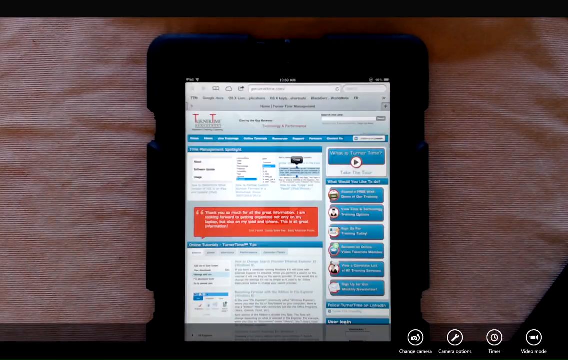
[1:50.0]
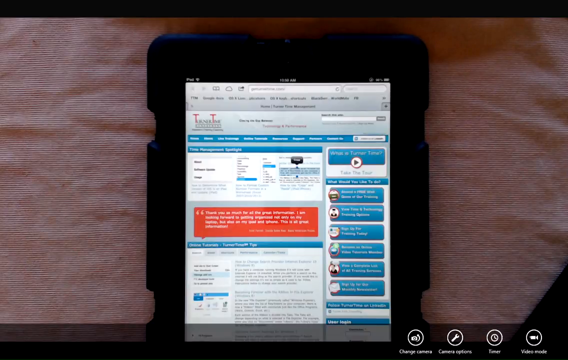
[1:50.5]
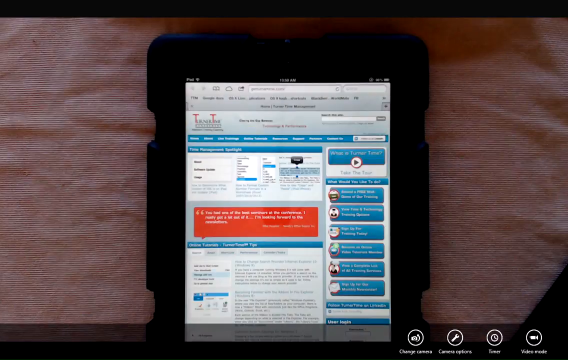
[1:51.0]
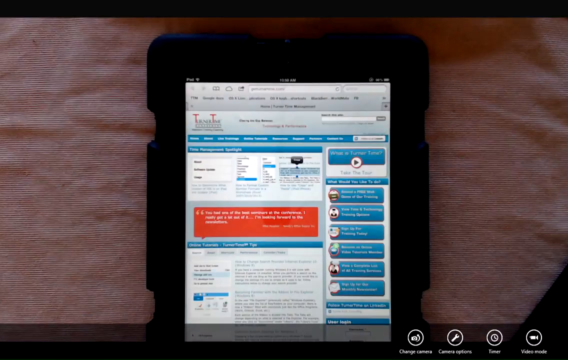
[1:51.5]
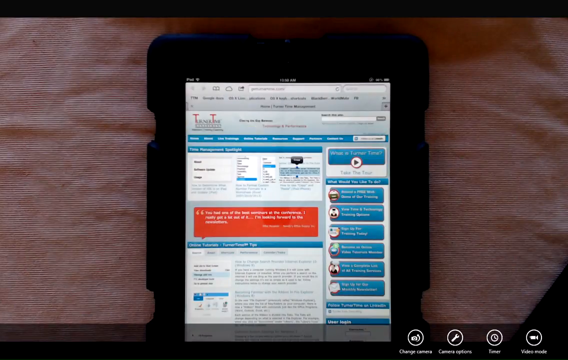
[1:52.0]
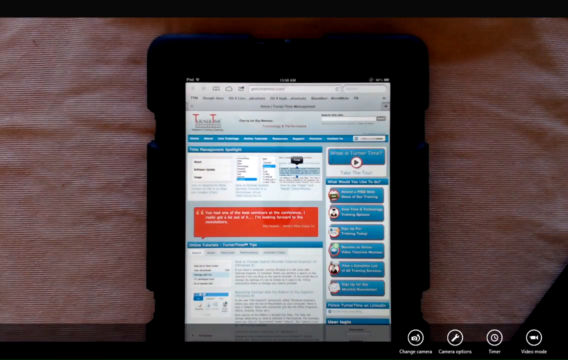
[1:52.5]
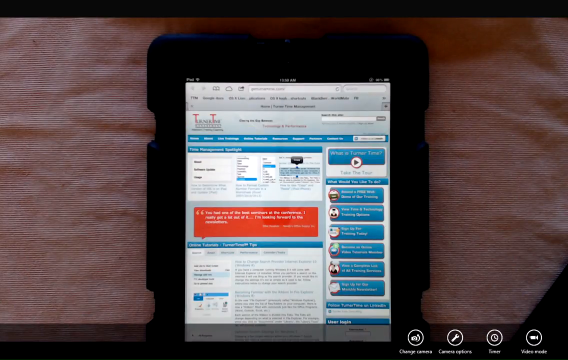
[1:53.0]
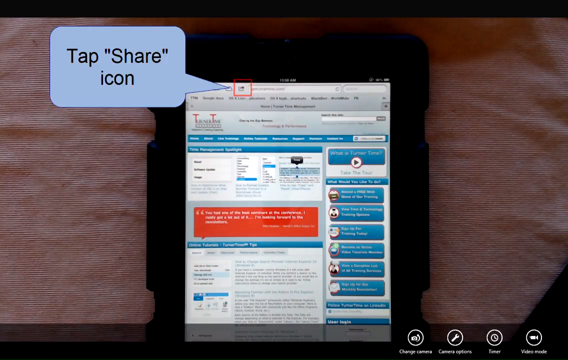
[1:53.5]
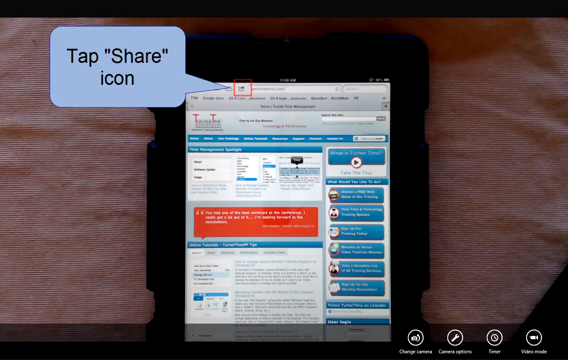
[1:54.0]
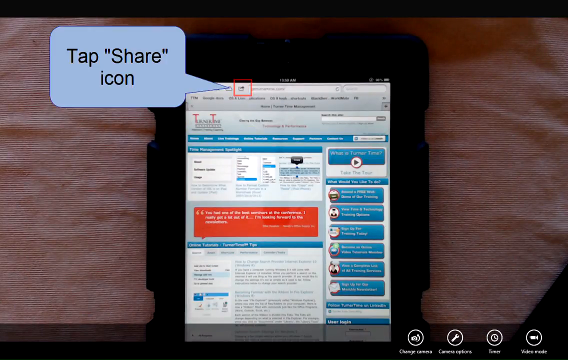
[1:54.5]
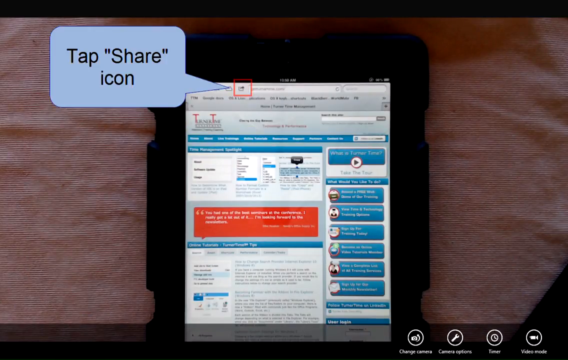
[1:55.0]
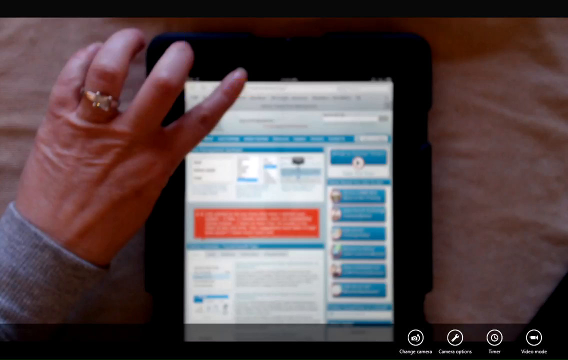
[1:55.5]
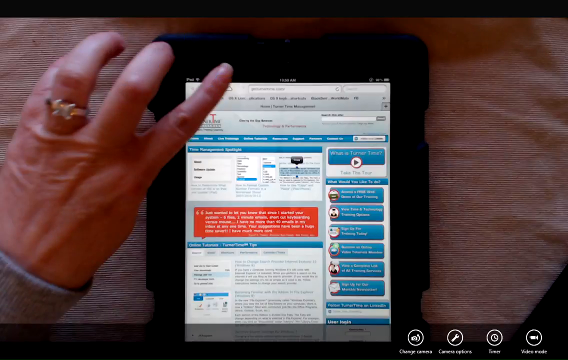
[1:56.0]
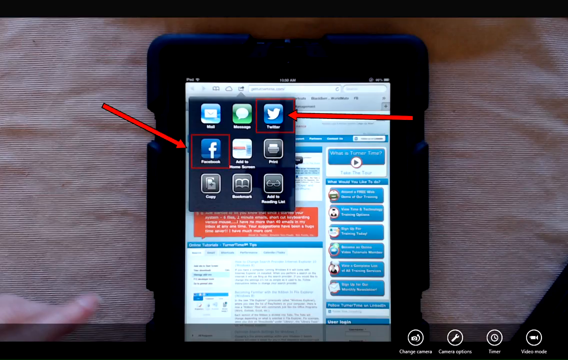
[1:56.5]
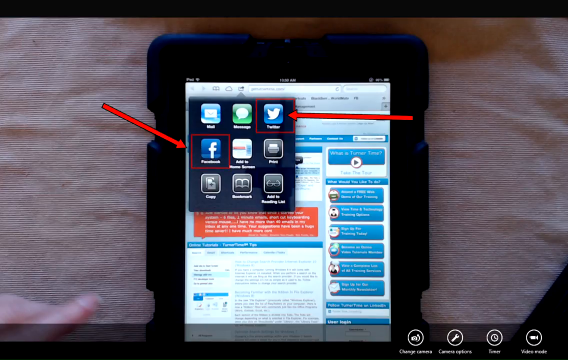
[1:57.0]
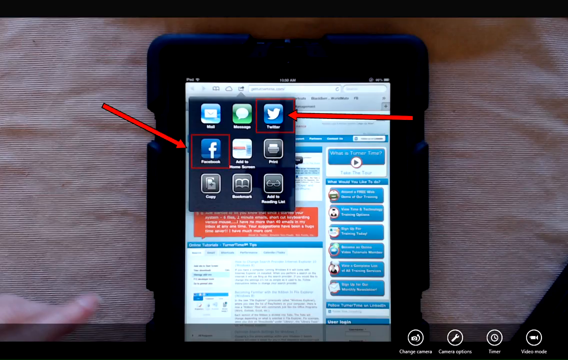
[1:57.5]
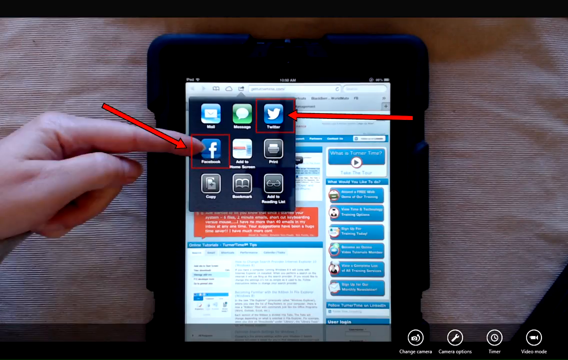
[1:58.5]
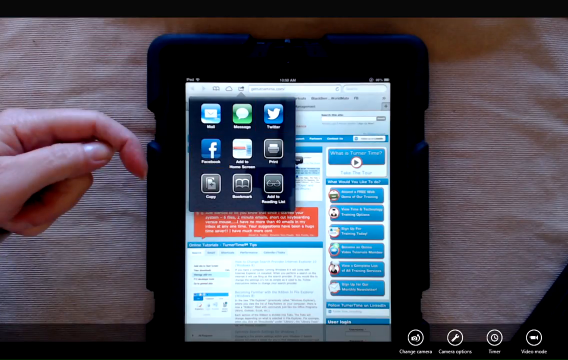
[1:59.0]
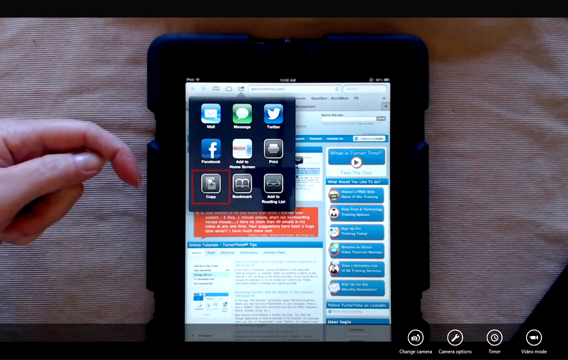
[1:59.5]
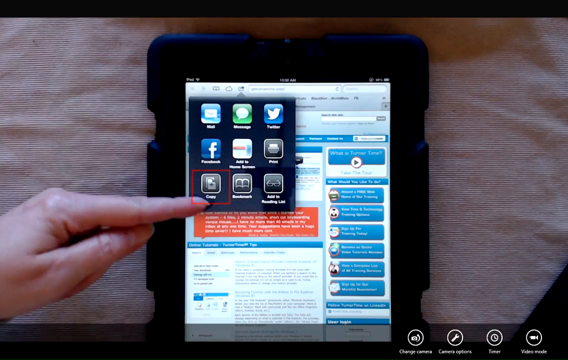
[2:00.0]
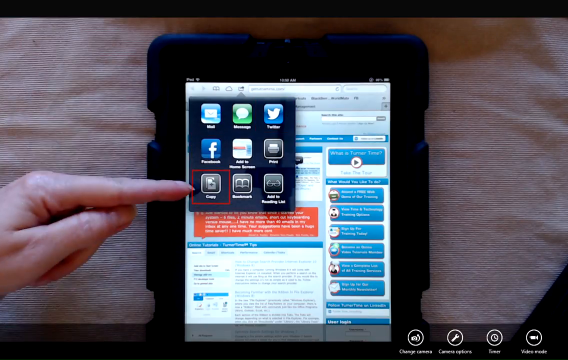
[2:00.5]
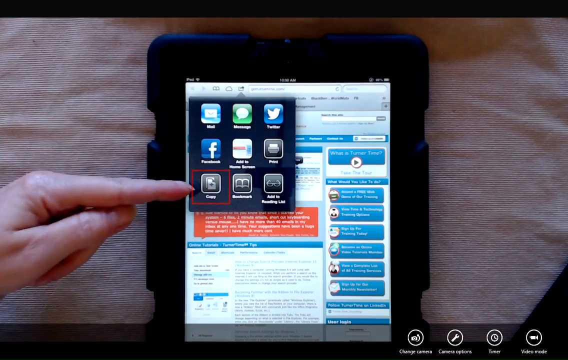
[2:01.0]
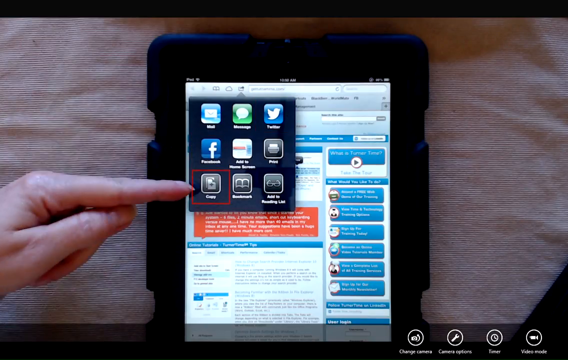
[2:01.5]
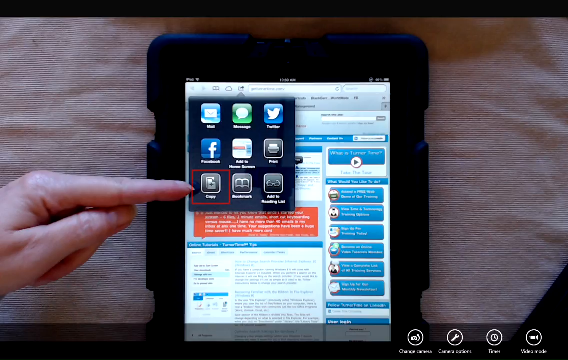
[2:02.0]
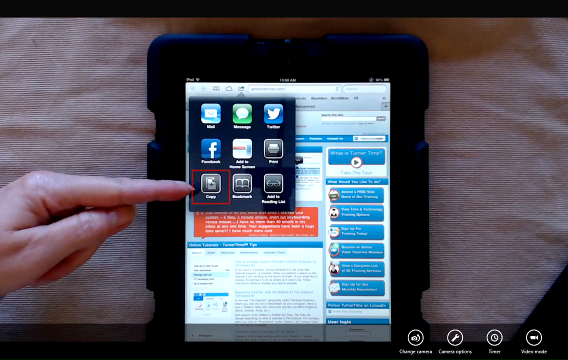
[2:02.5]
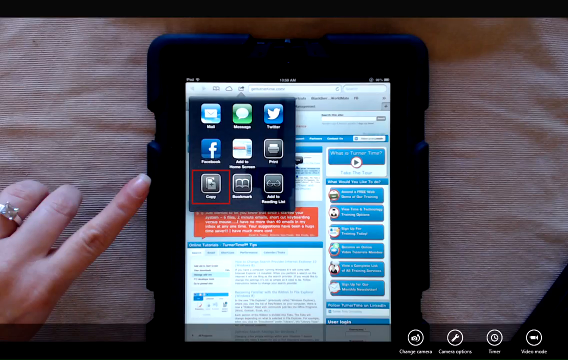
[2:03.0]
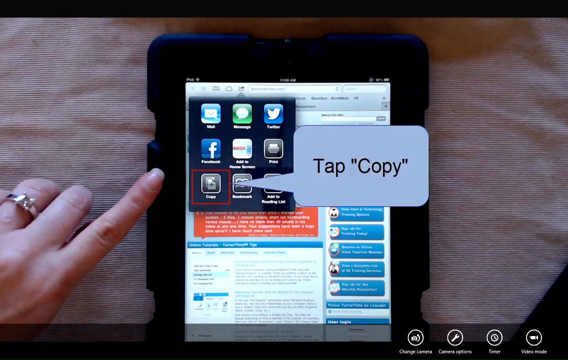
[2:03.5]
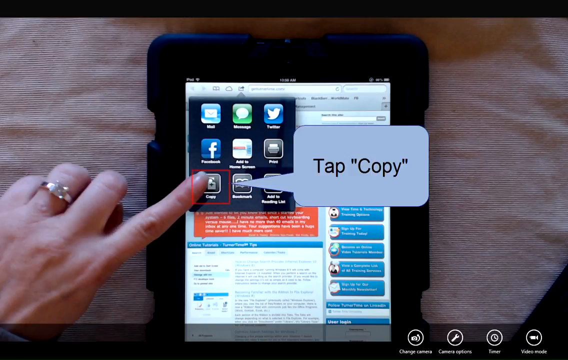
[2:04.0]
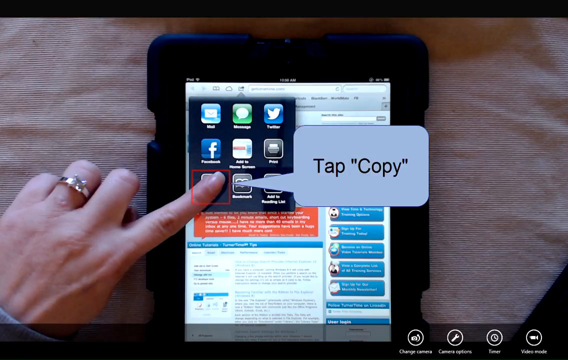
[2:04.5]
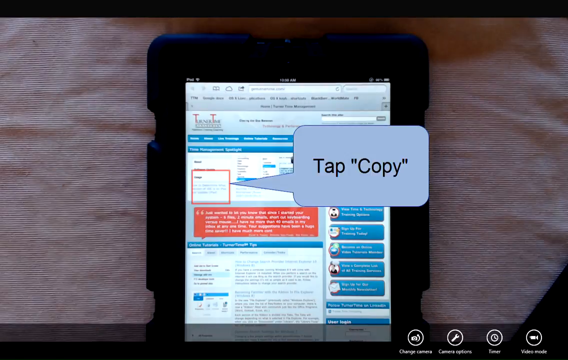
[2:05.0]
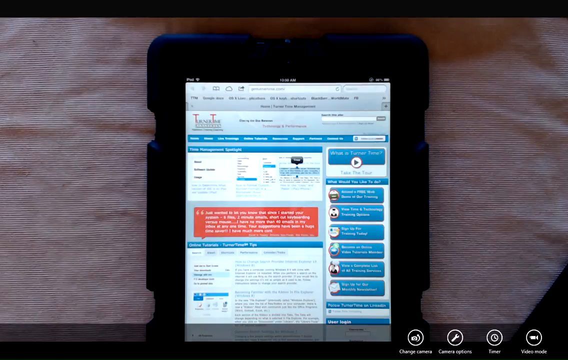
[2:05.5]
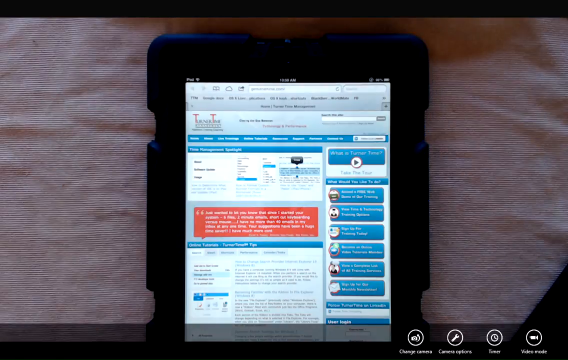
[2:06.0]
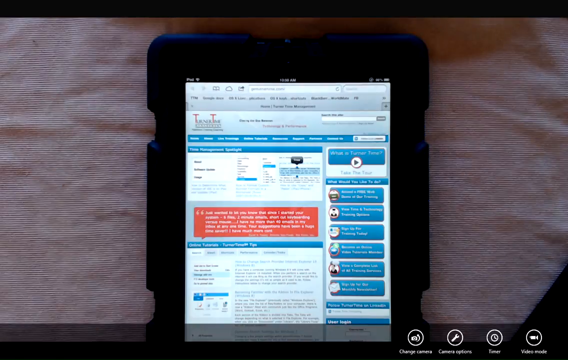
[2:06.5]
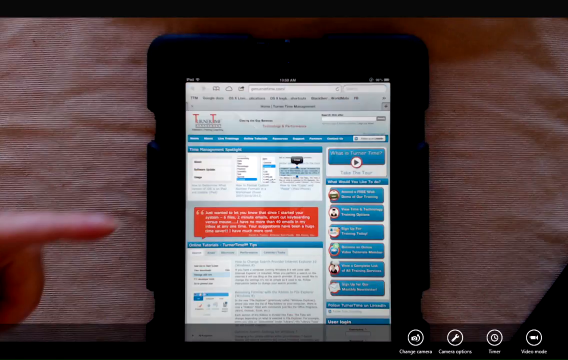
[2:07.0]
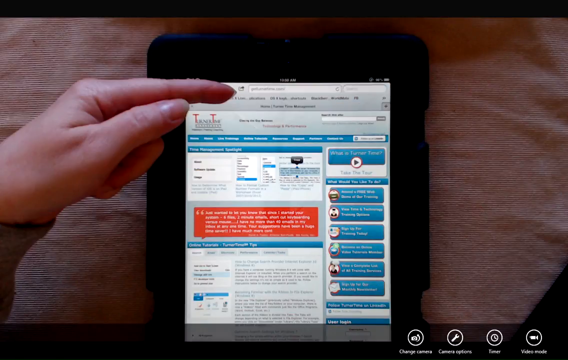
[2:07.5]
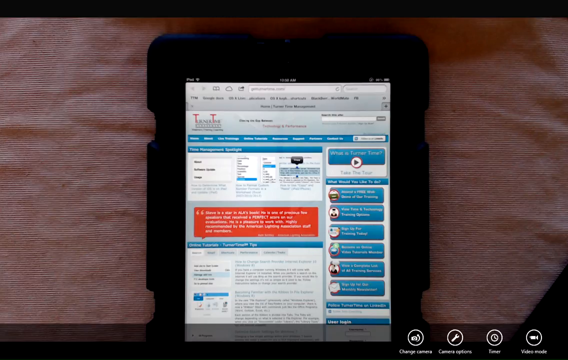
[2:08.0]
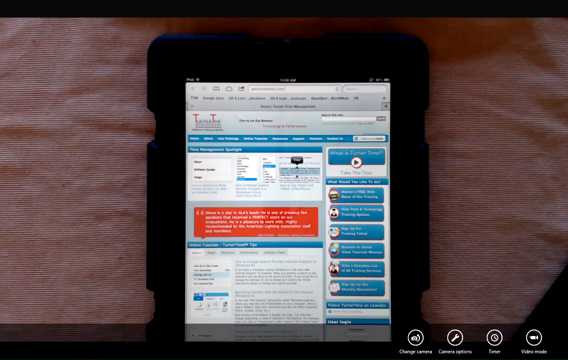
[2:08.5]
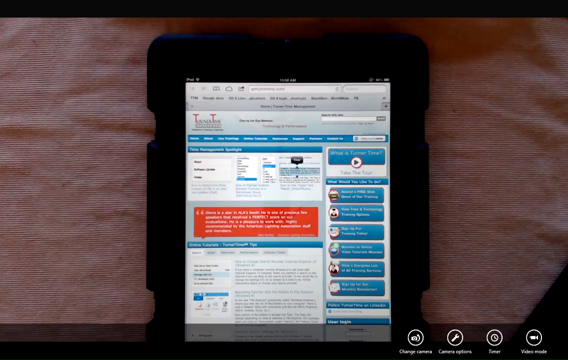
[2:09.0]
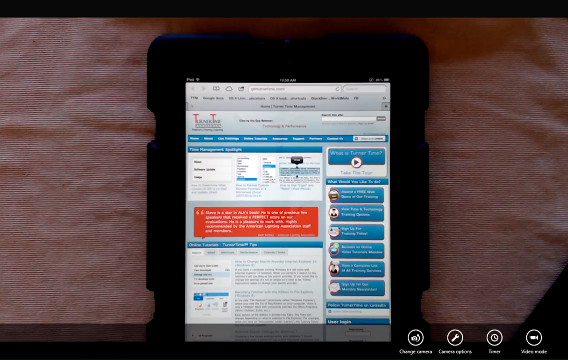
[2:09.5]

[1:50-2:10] The TurnerTime website is loaded on the device's screen, which stays fixed on this web page for several seconds before a "tap share icon" pop-up chat bubble appears in the upper left corner, pointing to a red box highlighted right next to the web browser bar. The left hand, its wrist covered by a gray shirt sleeve, comes into view; the index finger hovers over the red outline box and taps it before moving out of view. A pop-up of the available share options appears, with an arrow on the left side of the screen pointing to a Facebook icon outlined in a red box, and on the right side an arrow pointing left to the Twitter icon, also outlined in a red box.